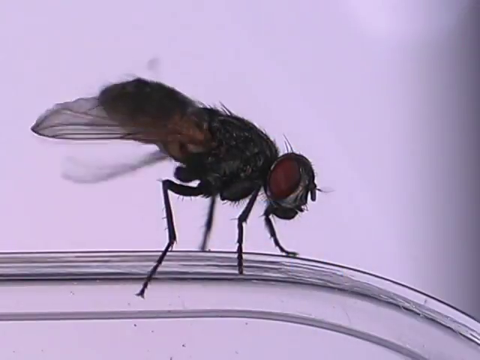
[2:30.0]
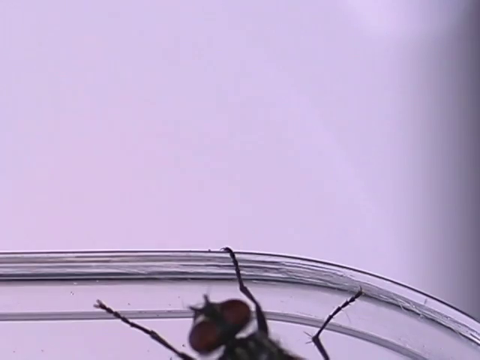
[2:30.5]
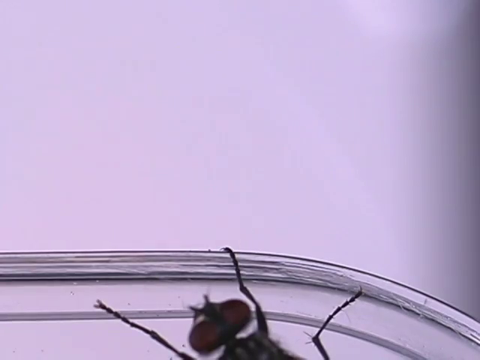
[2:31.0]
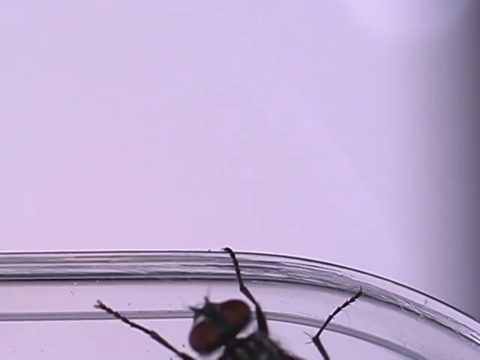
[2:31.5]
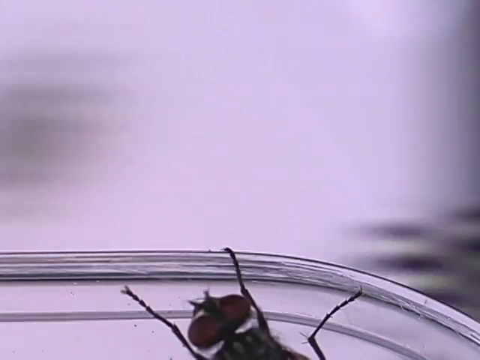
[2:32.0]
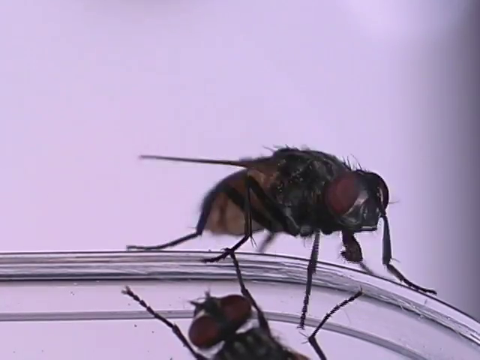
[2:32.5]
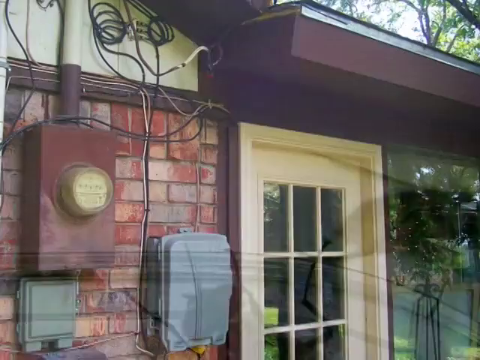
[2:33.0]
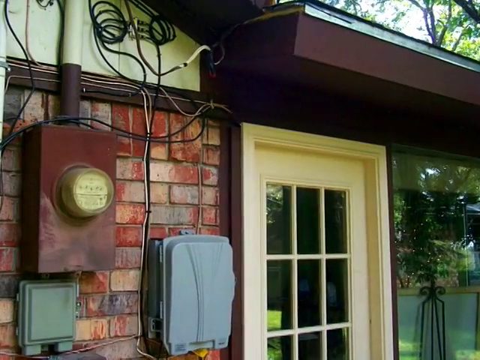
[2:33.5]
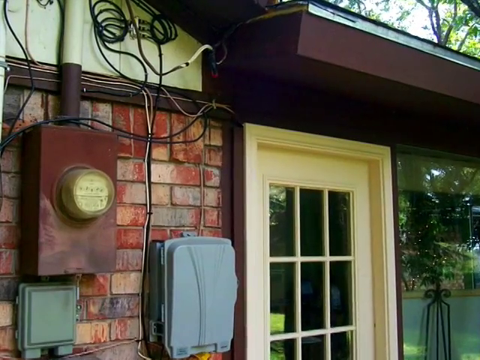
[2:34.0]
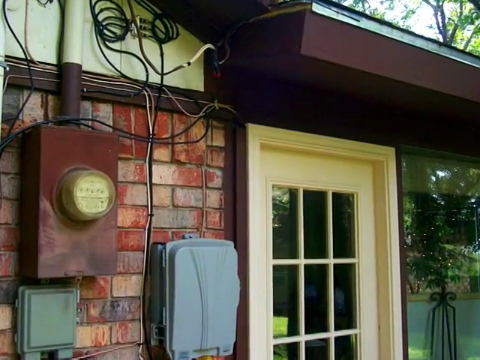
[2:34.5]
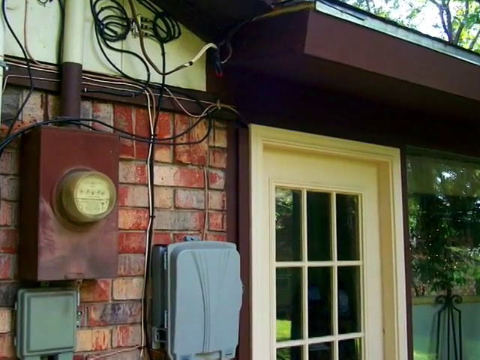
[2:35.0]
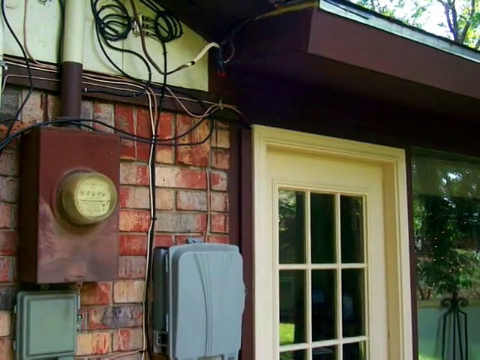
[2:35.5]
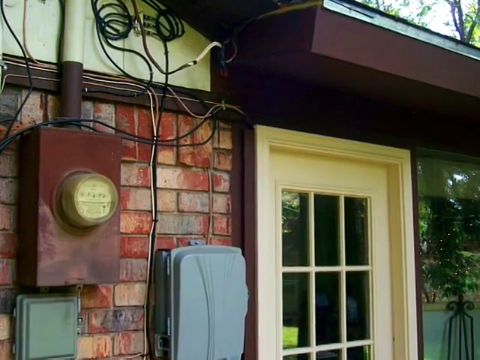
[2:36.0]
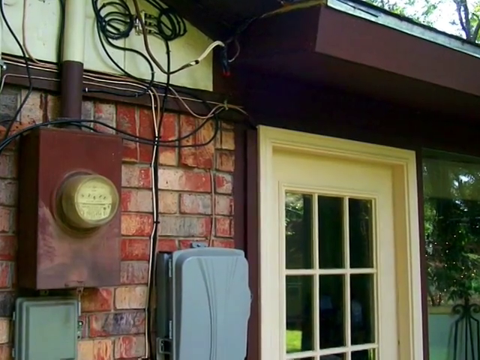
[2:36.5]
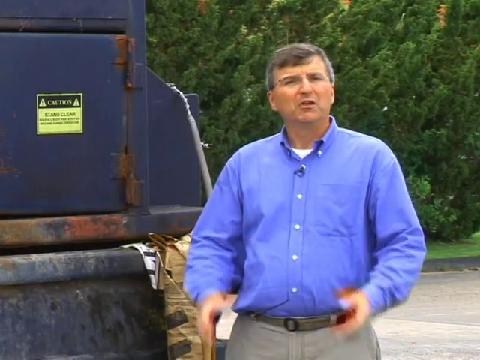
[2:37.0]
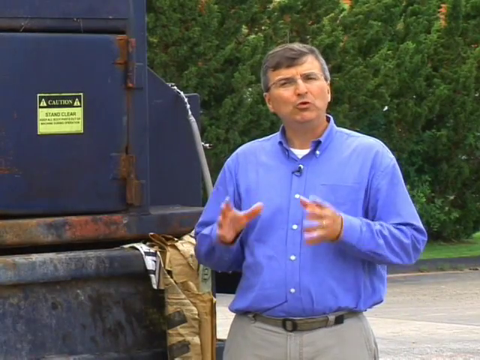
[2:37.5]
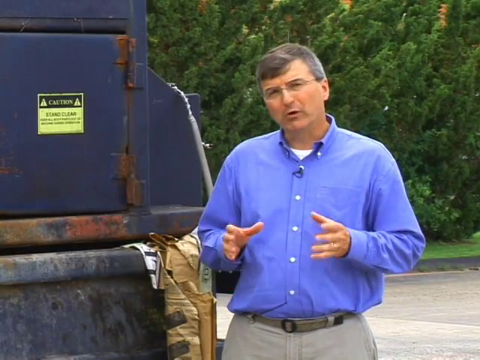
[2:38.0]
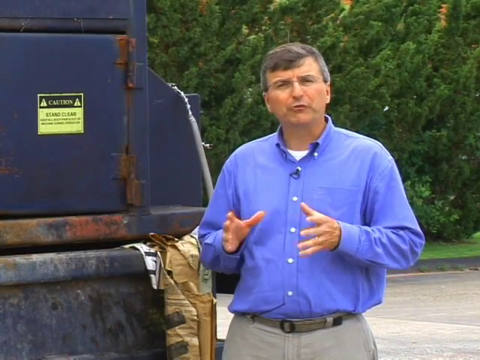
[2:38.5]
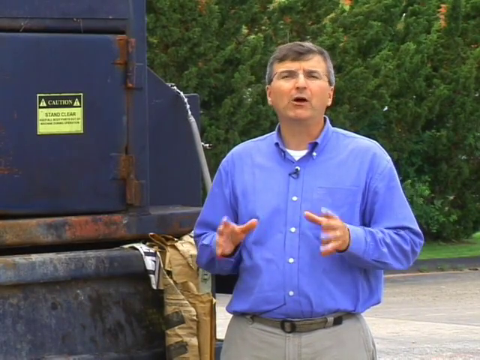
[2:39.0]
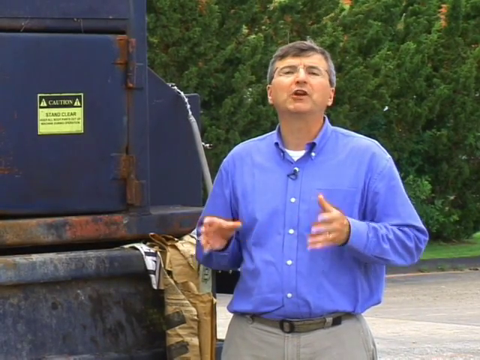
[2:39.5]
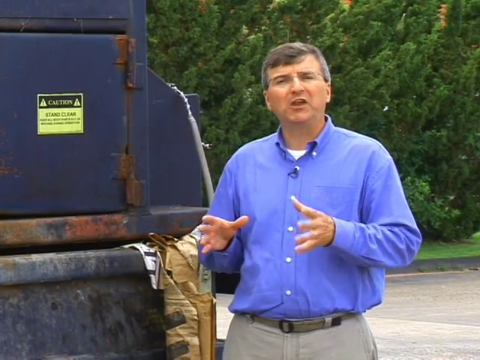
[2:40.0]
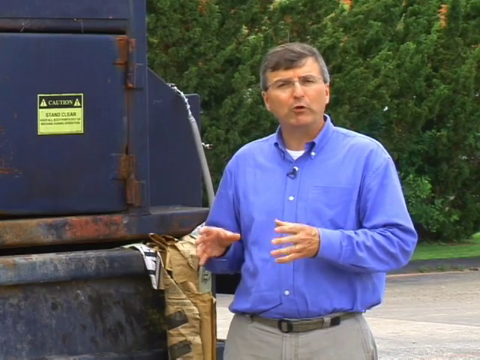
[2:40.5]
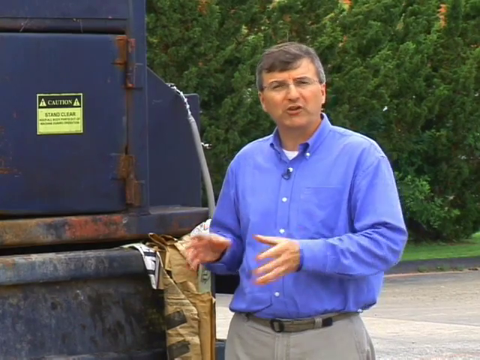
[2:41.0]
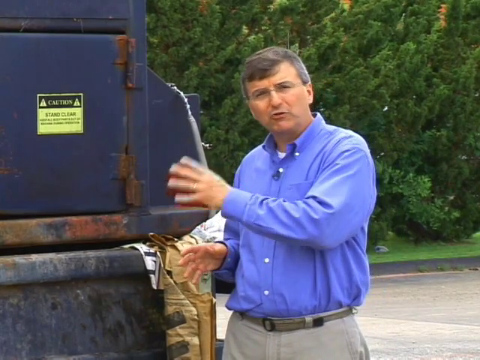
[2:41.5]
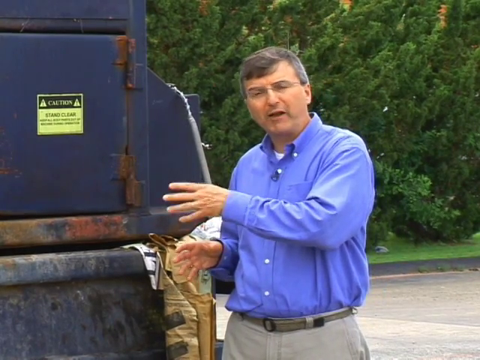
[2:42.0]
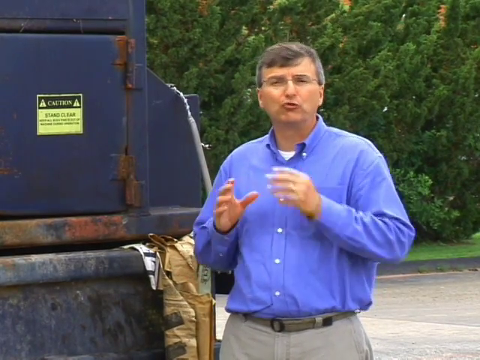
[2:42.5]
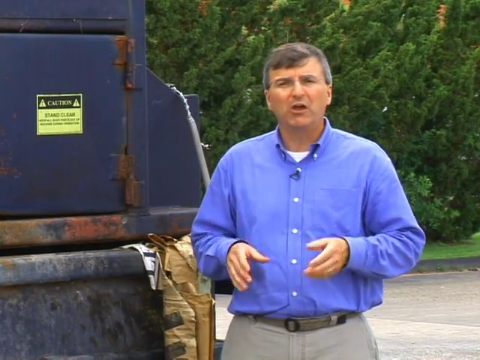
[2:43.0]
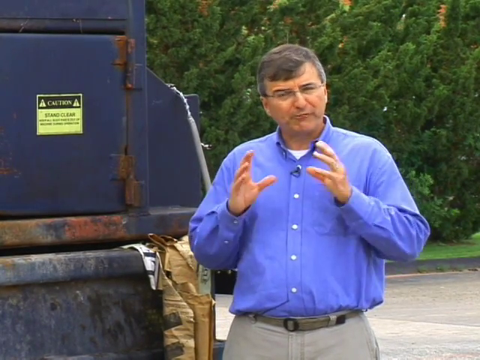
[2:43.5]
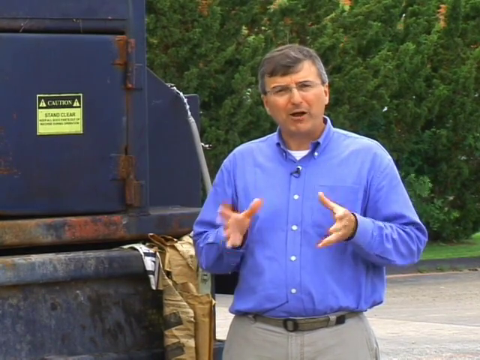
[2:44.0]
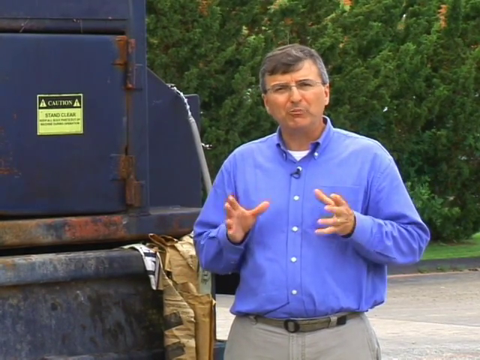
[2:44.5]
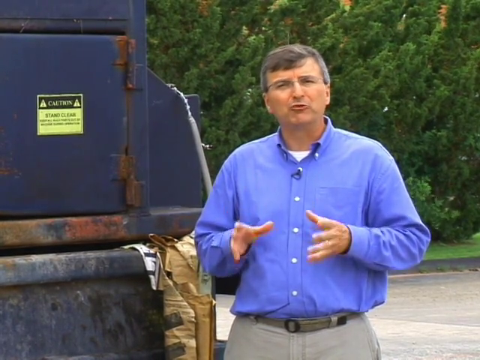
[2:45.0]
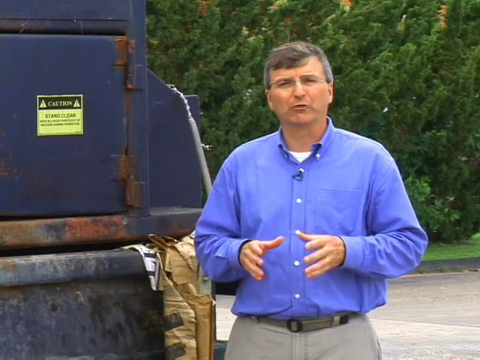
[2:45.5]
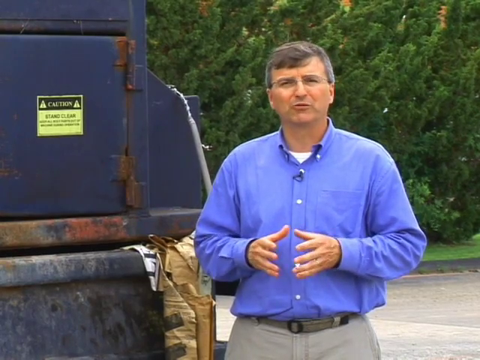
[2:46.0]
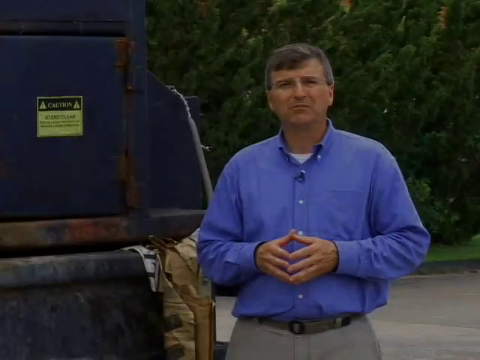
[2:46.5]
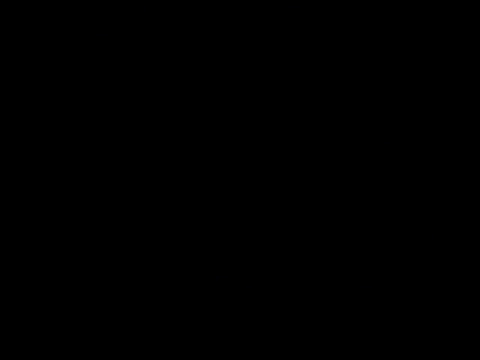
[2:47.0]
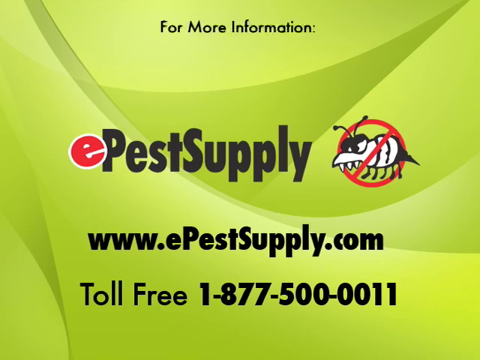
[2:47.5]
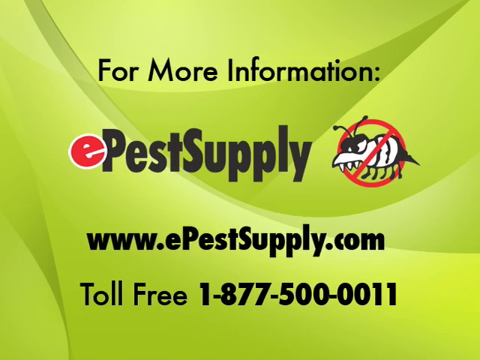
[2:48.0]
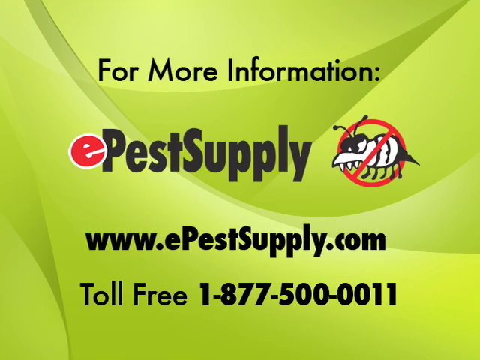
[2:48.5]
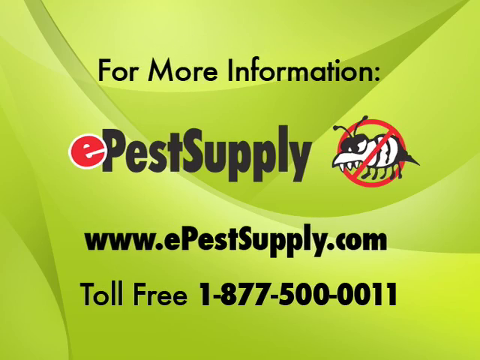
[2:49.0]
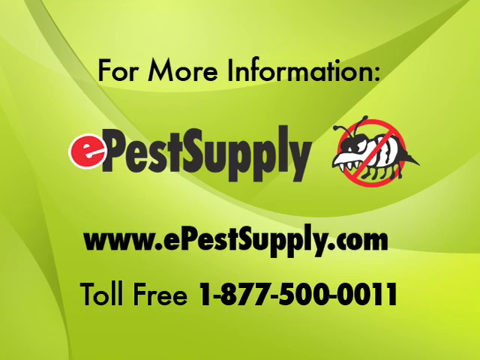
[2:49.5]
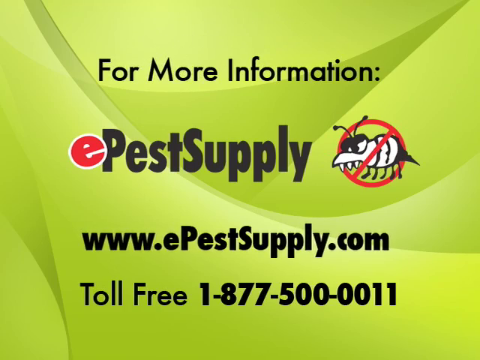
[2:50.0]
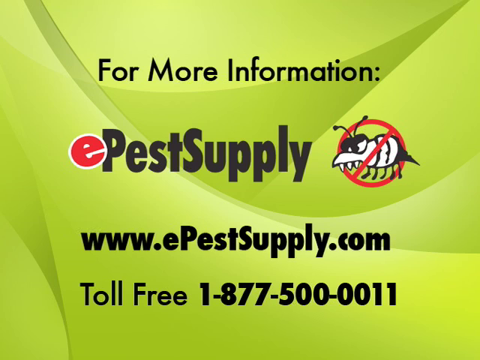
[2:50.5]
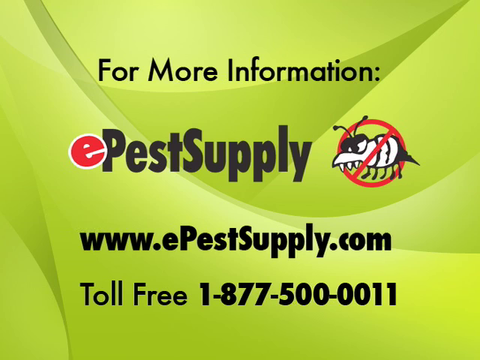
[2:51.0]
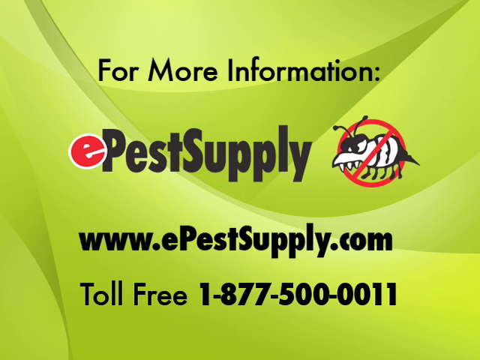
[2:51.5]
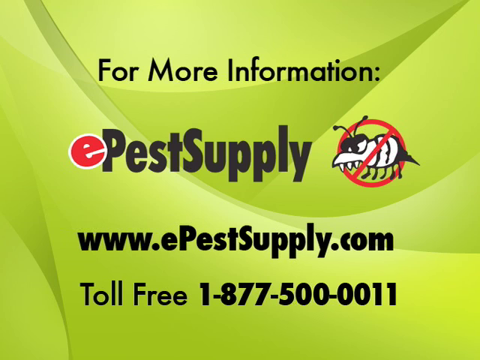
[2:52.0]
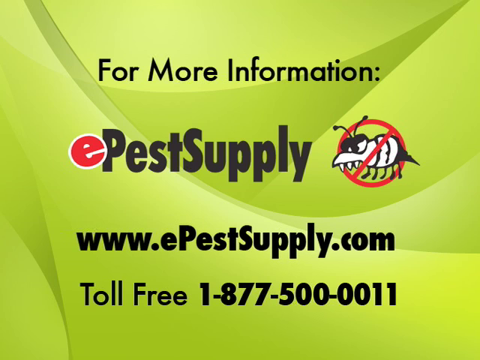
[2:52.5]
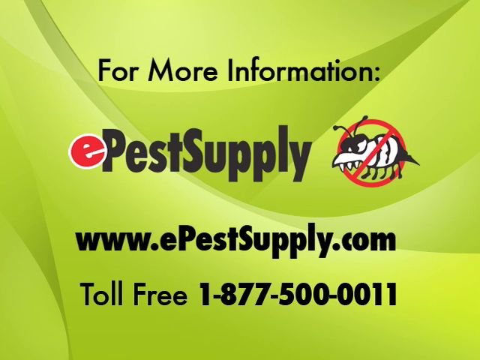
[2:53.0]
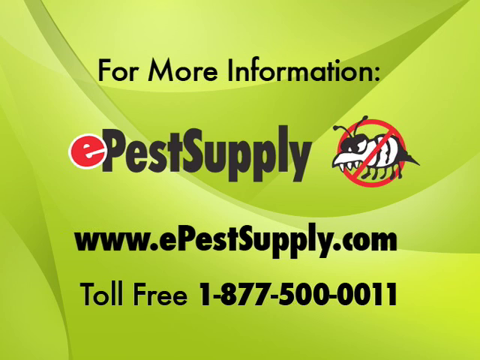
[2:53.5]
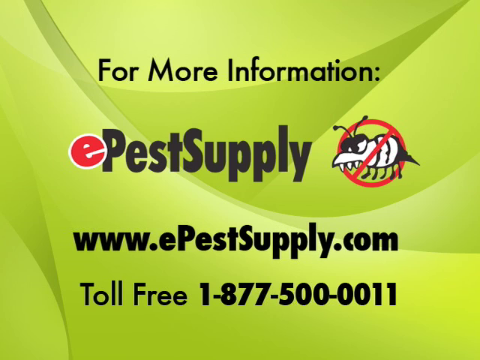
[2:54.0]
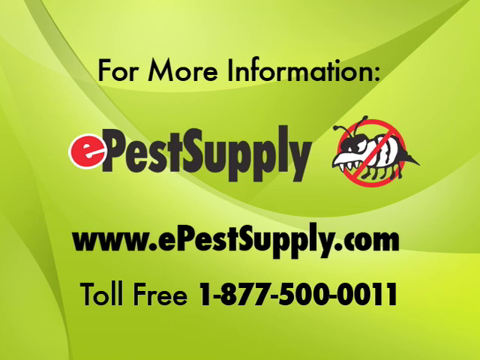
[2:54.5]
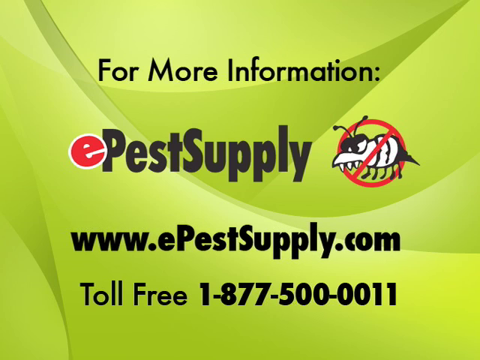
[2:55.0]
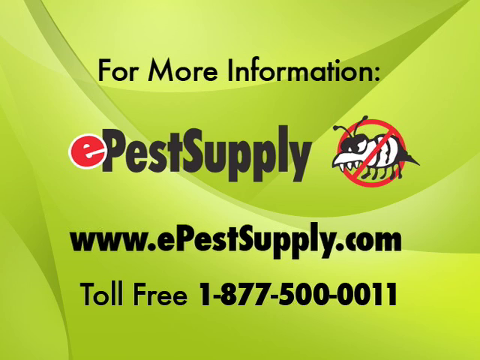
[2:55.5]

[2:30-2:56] The video appears to be a promotion for ePestSupply. A close-up shows a fly perched on something; its wings move and it flies away. Another fly climbs below it, and finally a fly lands on top of it. The view changes to the side of a house, with a yellow door with glass panes on the right of the screen and the overhang of the house just above it. On the left is a portion of a brick wall with an electric meter, two other metal boxes, and many wires running from the boxes up to the roof. The video then changes to a man standing in front of what looks like a large blue garbage dumpster, with what looks like pieces of garbage or fabric hanging out of it on the left side. The man stands on the right of the screen and speaks to the camera. He wears a long-sleeved blue shirt with tan pants and a belt, holds his hands out in front of him and gestures as he speaks, at one point gesturing toward the dumpster. The video ends with a title card that reads "For More Information: ePestSupply, www.ePestSupply.com, Toll Free 1-877-500-0011."